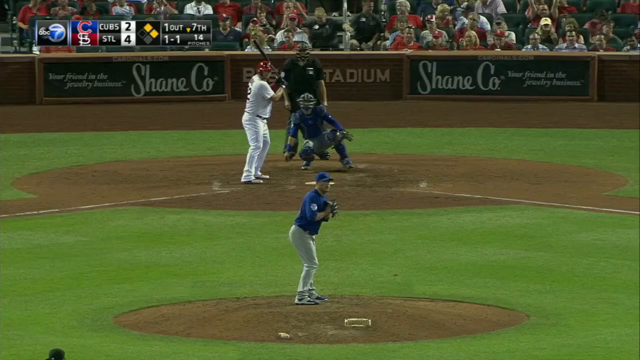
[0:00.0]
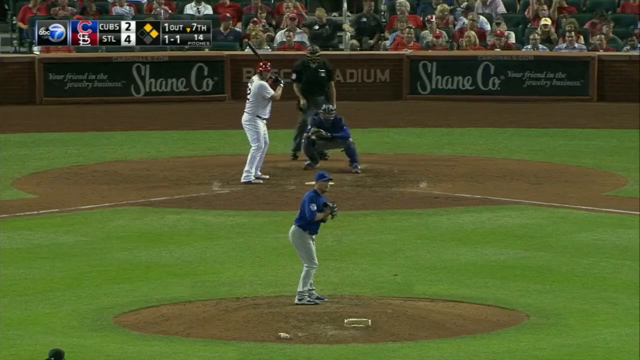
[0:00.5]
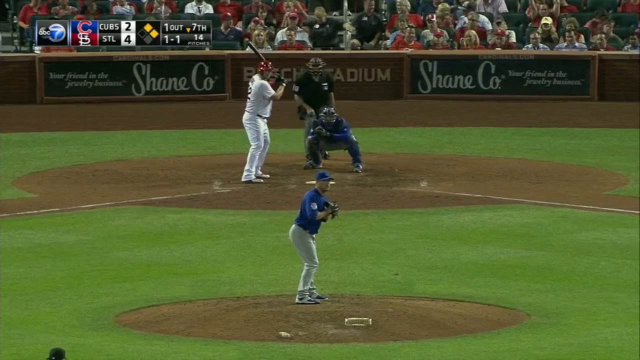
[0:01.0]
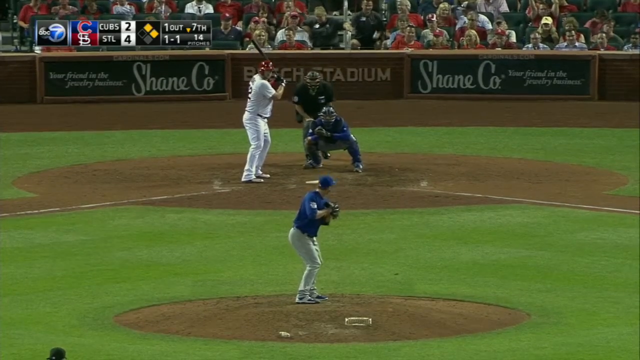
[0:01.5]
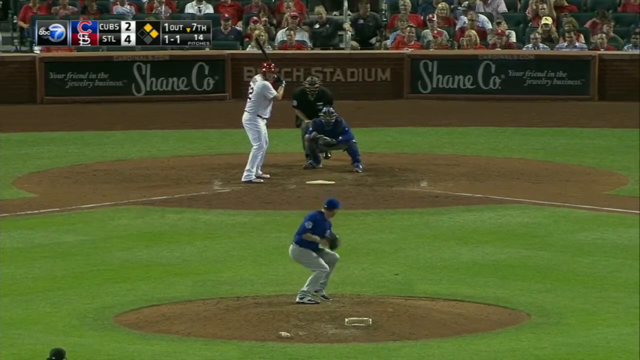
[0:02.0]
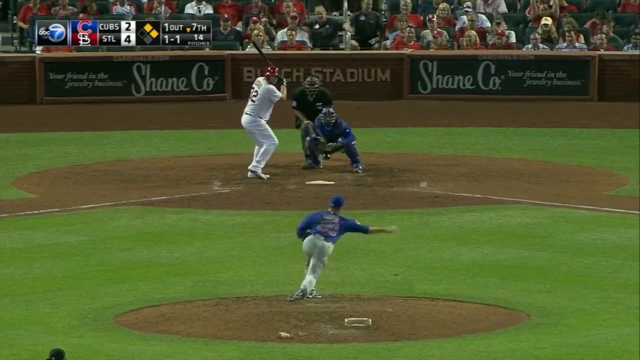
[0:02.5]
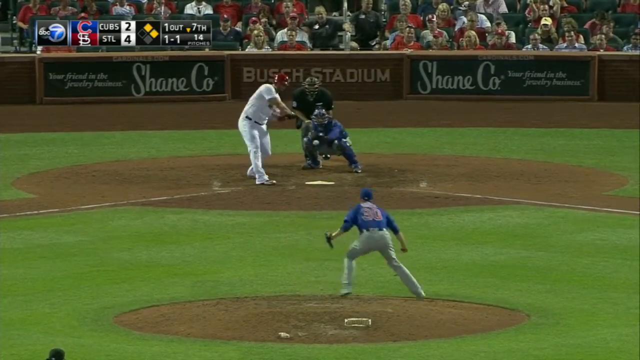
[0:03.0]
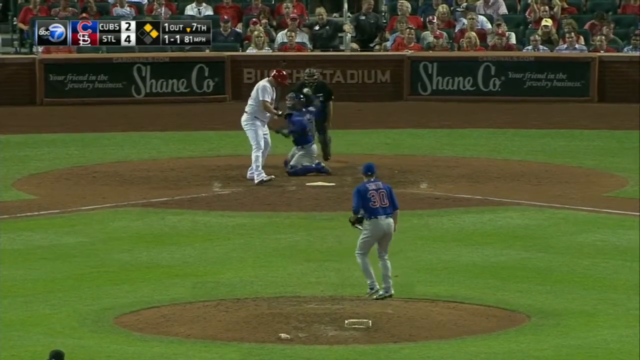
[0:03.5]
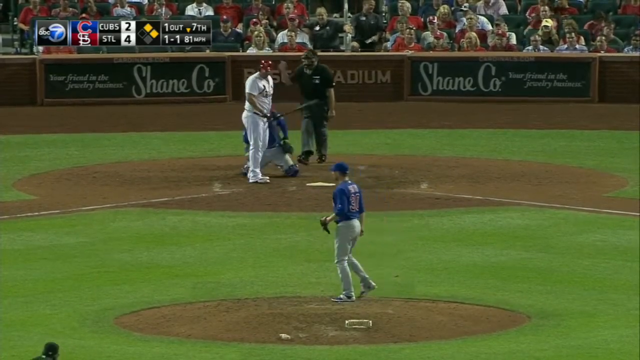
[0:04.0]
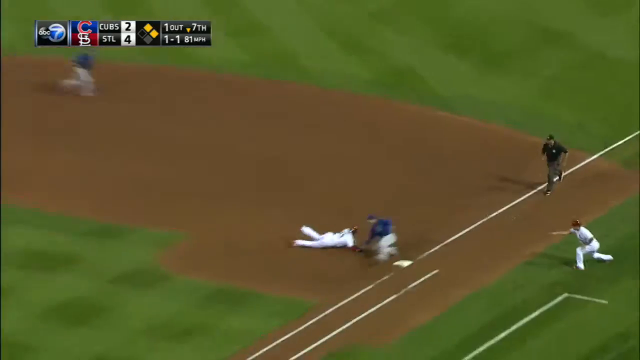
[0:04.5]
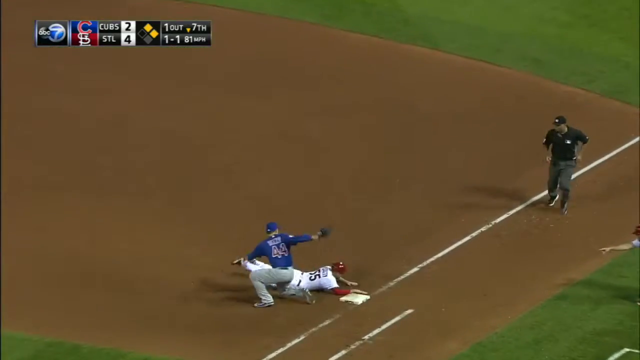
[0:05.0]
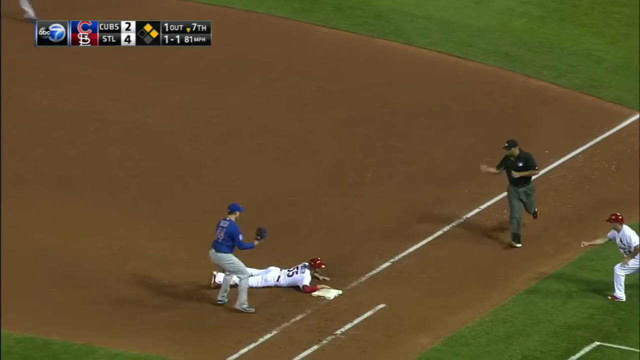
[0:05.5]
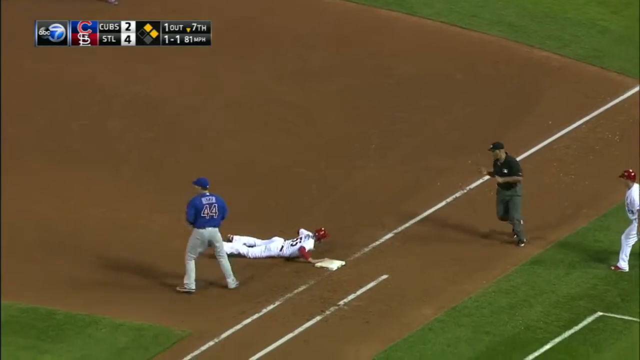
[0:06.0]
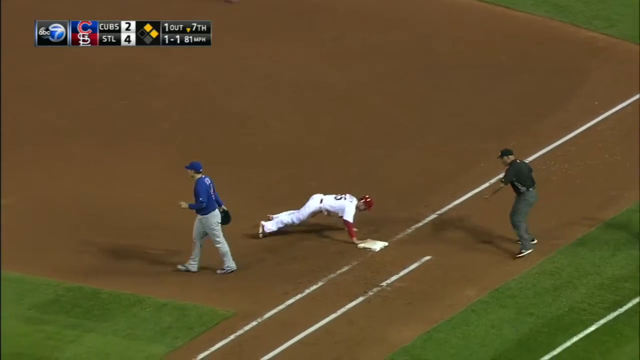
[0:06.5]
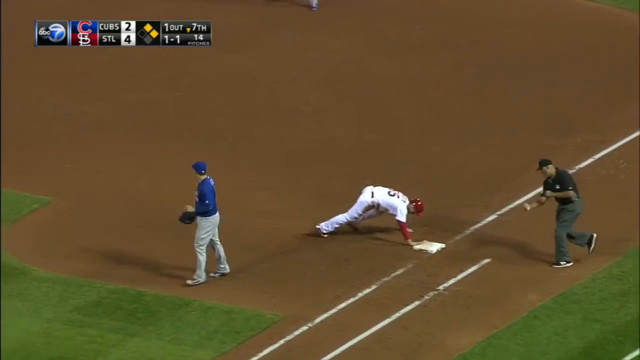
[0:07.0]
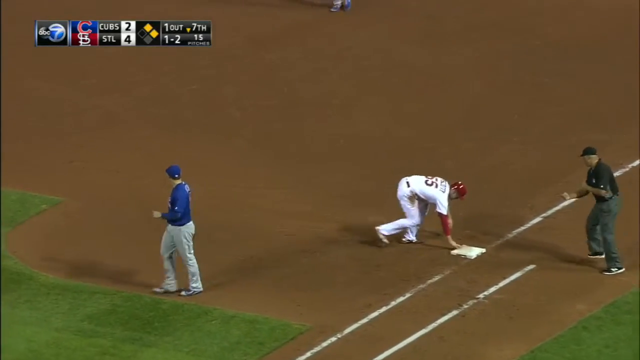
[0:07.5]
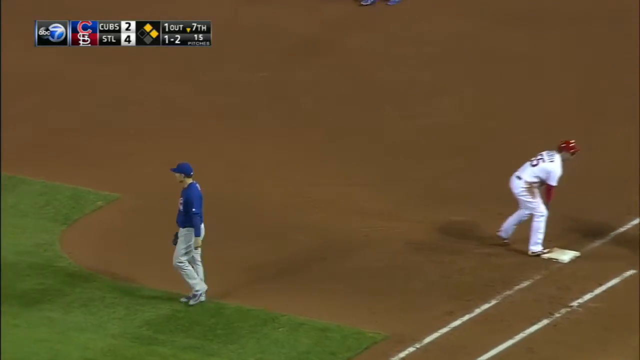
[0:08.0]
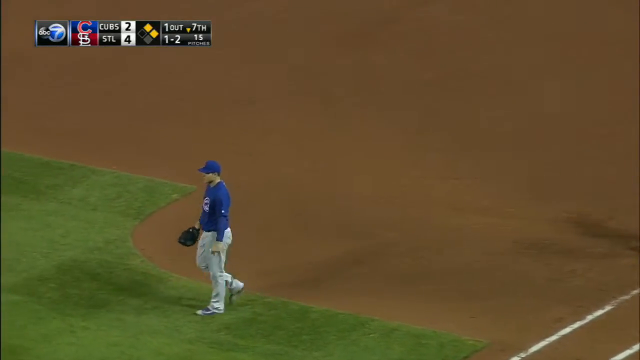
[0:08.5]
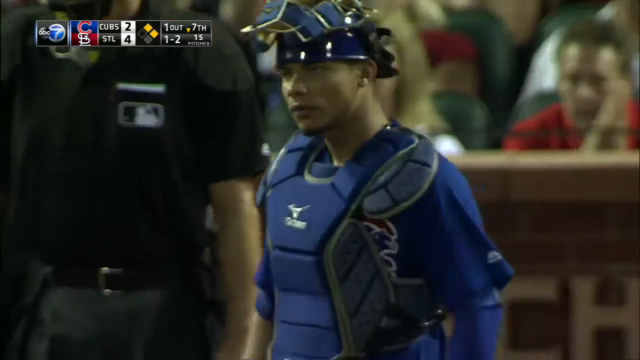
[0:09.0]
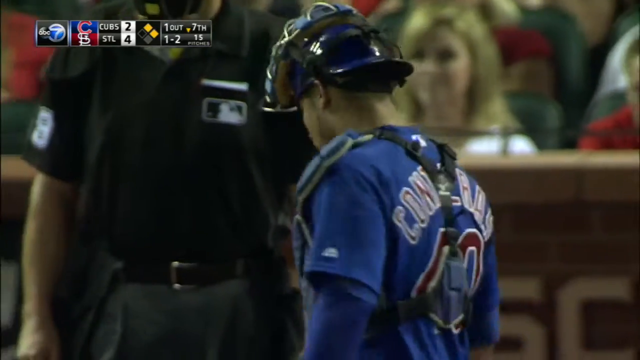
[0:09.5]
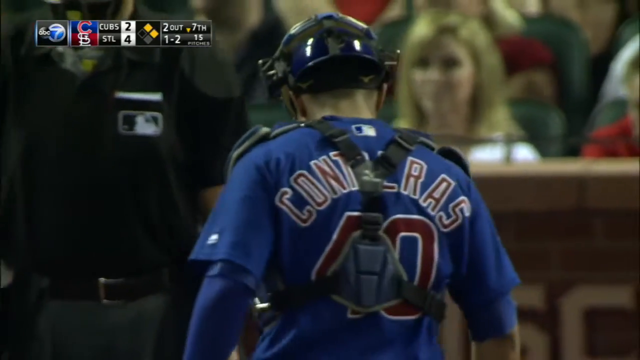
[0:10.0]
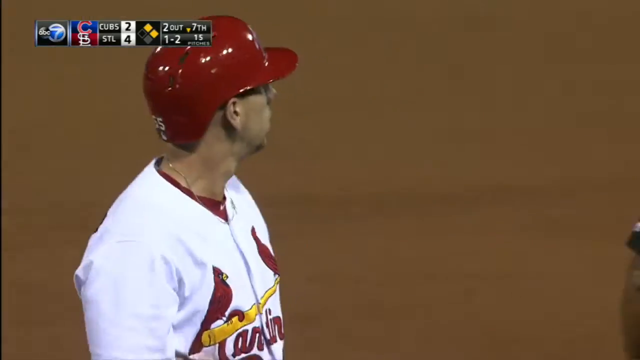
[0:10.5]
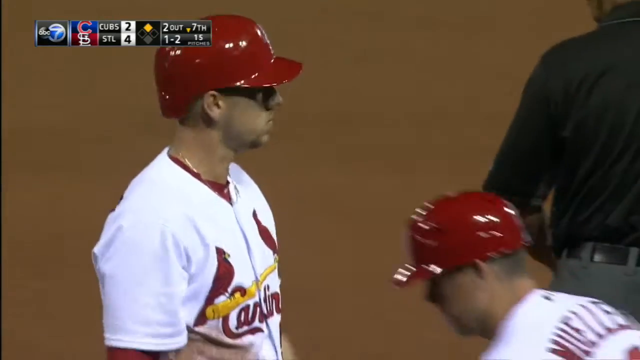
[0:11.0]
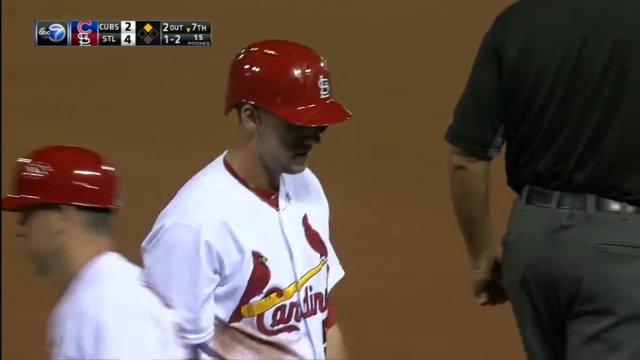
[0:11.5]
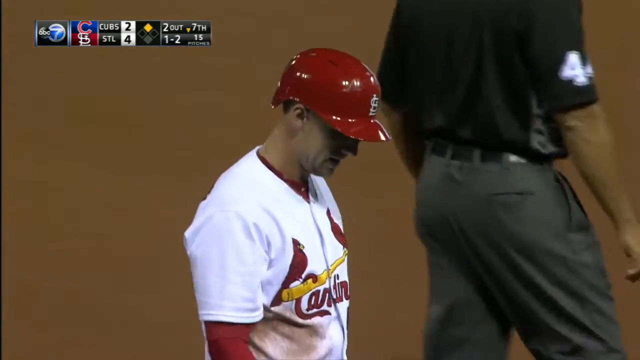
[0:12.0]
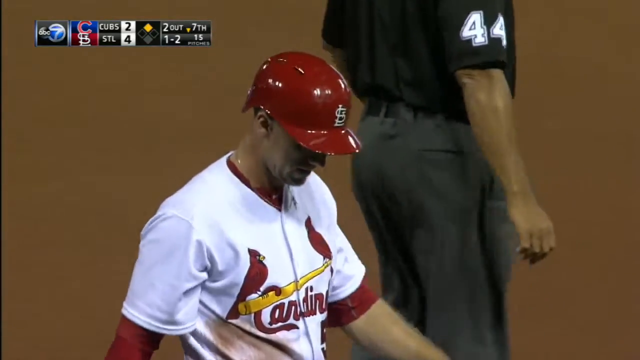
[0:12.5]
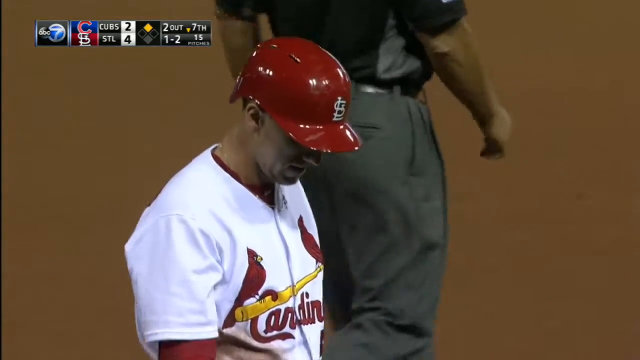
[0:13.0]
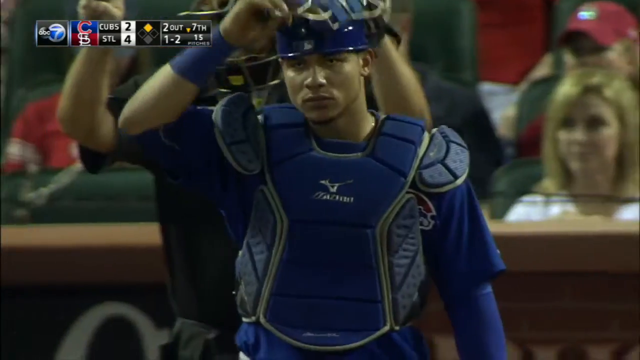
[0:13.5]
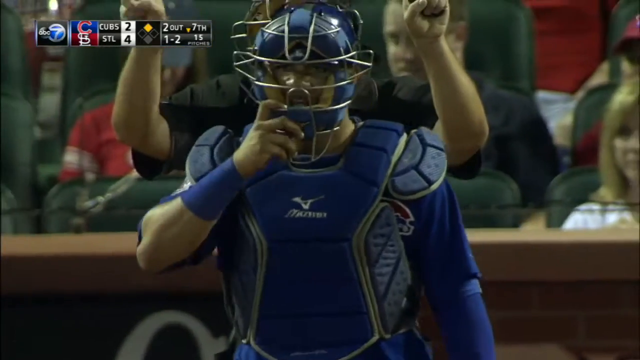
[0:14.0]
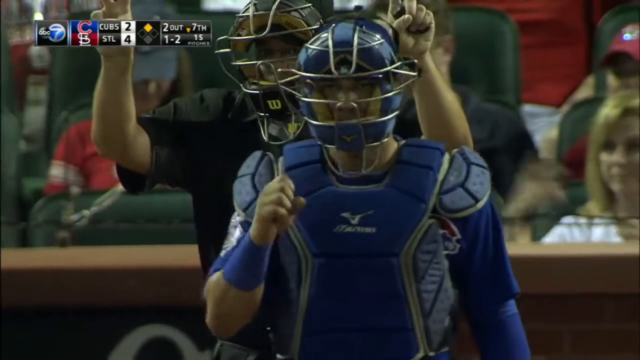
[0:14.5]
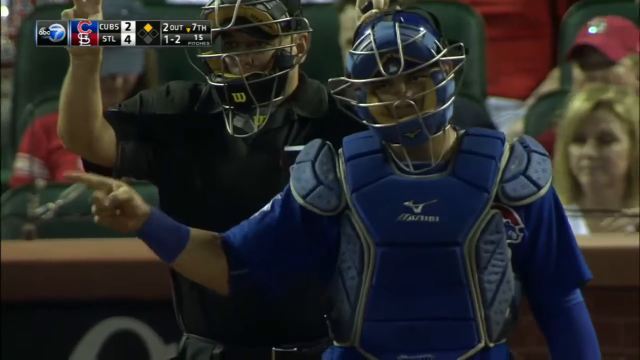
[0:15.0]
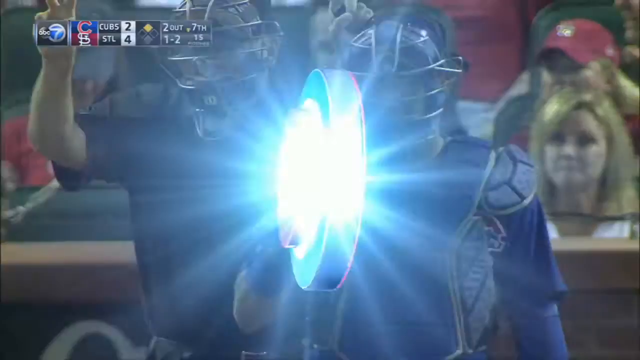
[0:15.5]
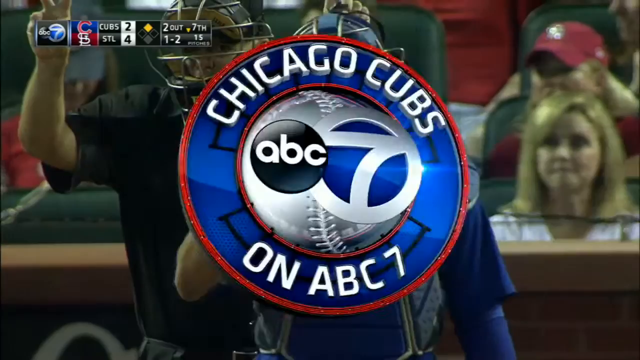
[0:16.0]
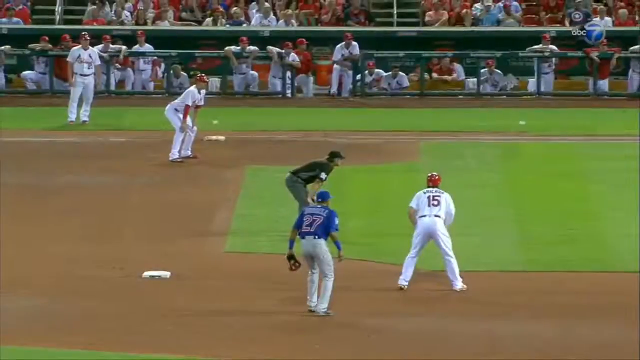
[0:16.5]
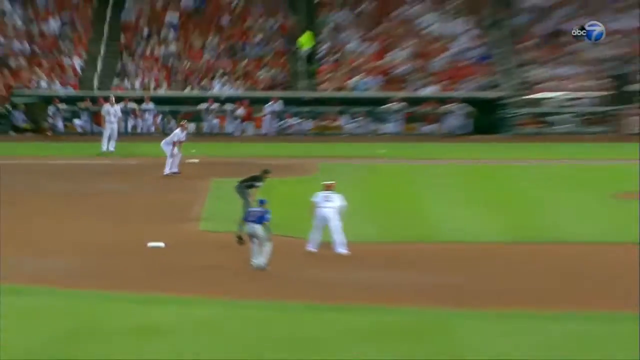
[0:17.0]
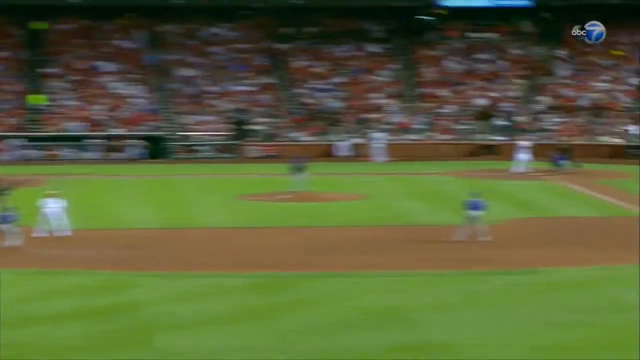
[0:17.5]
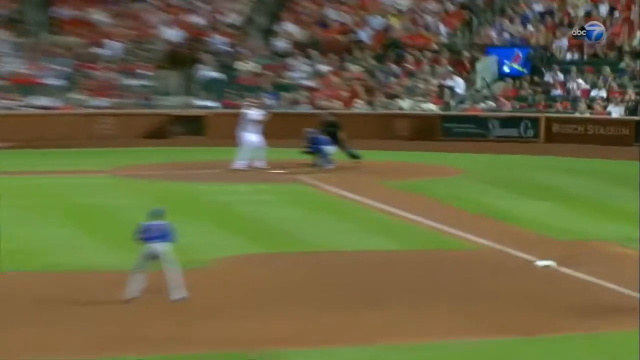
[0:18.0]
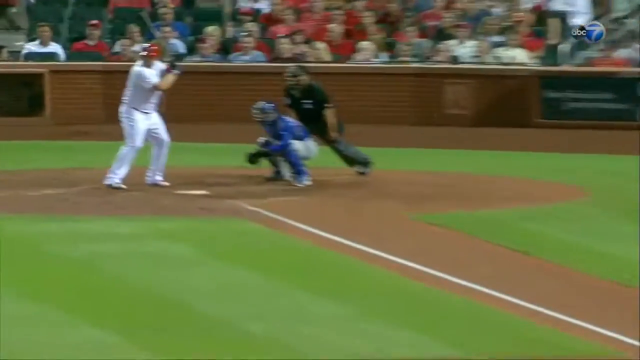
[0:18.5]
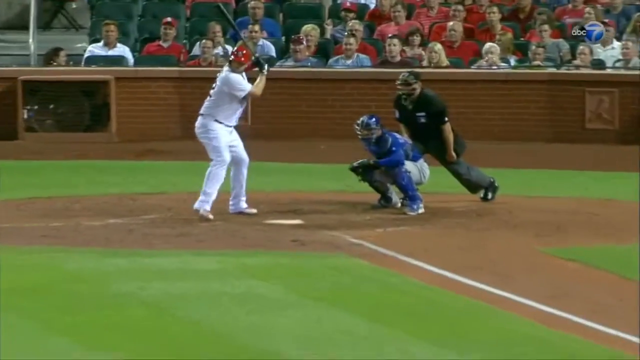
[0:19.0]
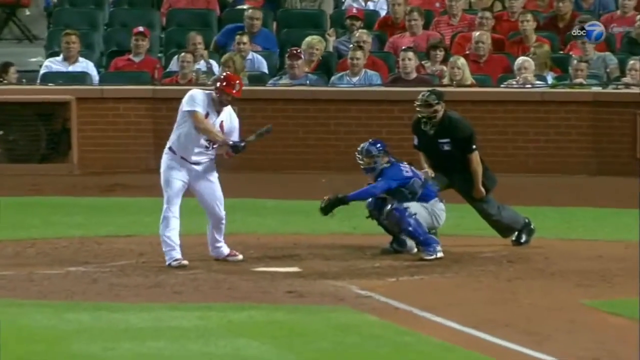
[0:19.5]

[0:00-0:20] A baseball game between the Cubs and STL is on screen, with a red background carrying the team names, and it is on ABC 7. The score shows the Cubs with 2 and STL with 4, and the screen reads "1 out 7th down 1-1 14 pitches." The Cubs appear to be pitching, since they have blue on. One player has his head facing back toward the outfield. The batter looks left-handed, since he is on the left side. The pitcher leans forward with his back leg, the right leg, up, throwing the baseball in a way that looks like throwing a bowling ball. The batter barely swings. STL is the Cardinals. A replay shows the batter barely hitting while a teammate of his starts to run toward the next base; it is unclear whether he makes it before the ball is caught.